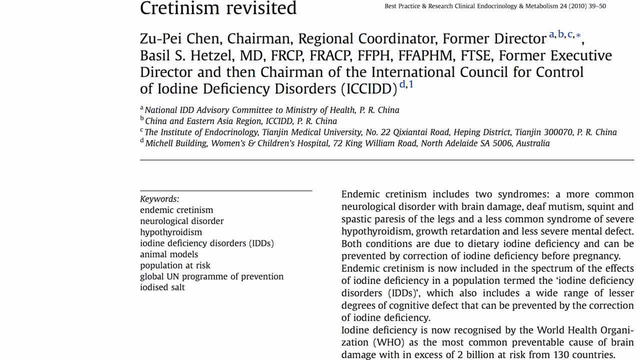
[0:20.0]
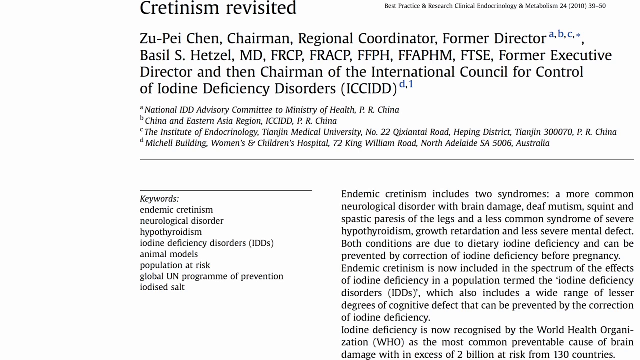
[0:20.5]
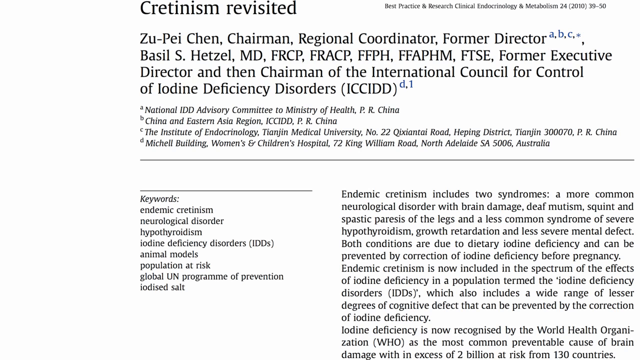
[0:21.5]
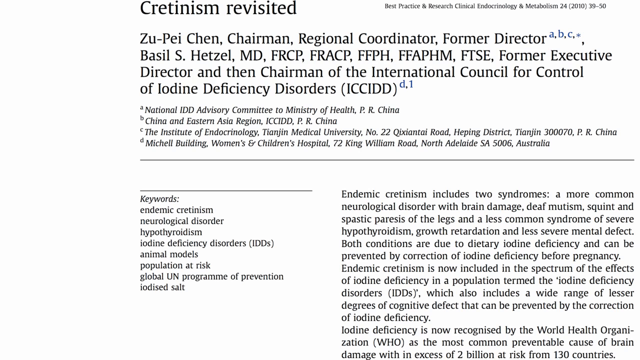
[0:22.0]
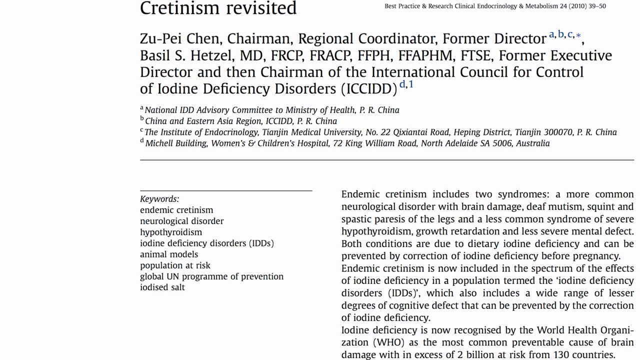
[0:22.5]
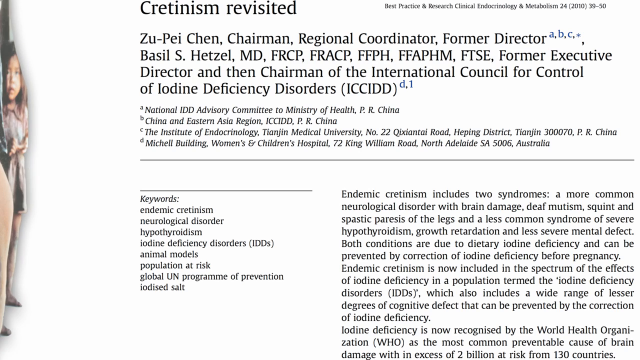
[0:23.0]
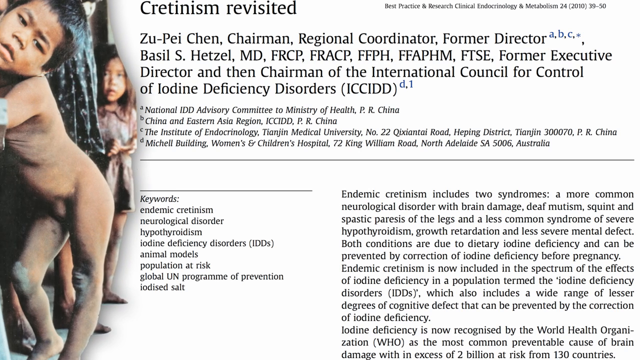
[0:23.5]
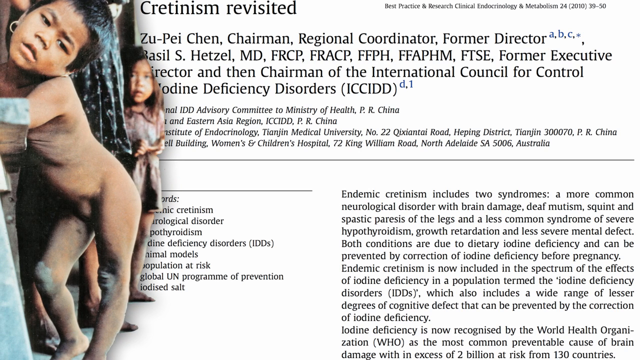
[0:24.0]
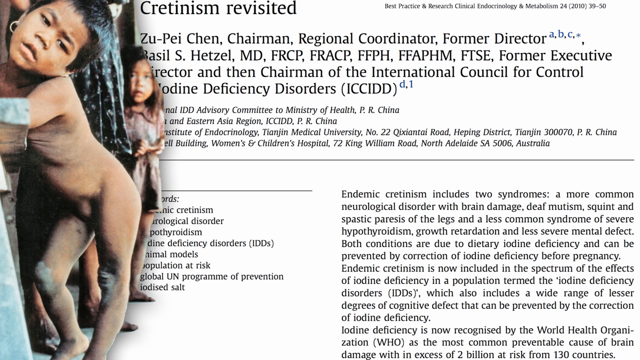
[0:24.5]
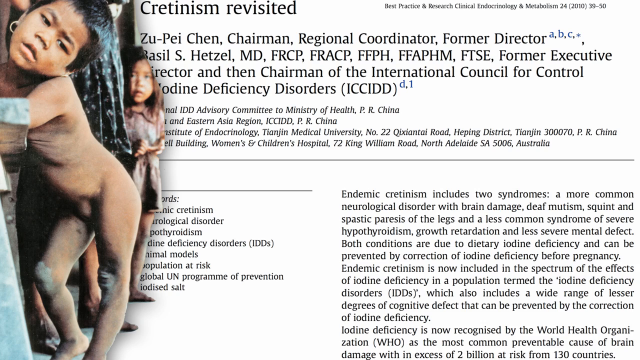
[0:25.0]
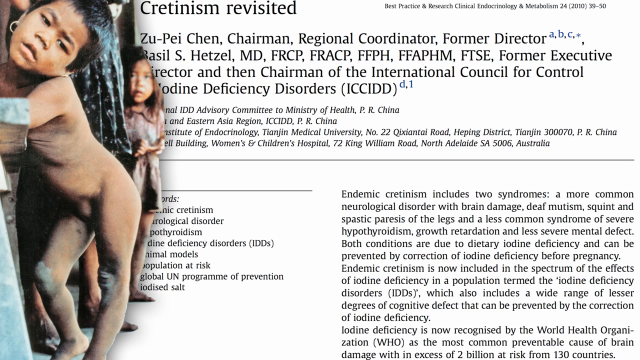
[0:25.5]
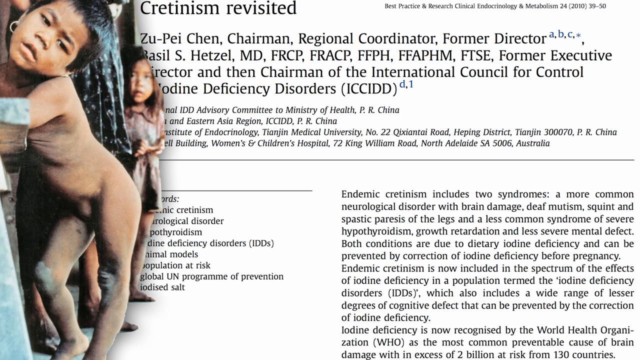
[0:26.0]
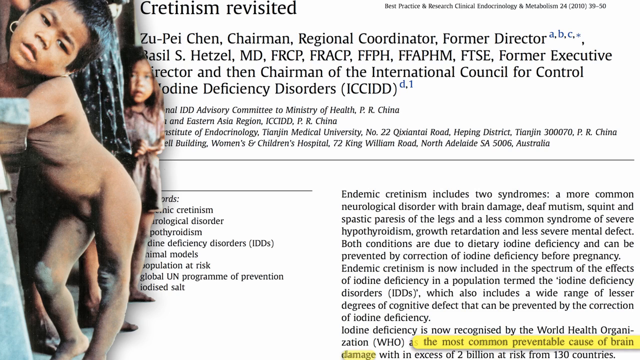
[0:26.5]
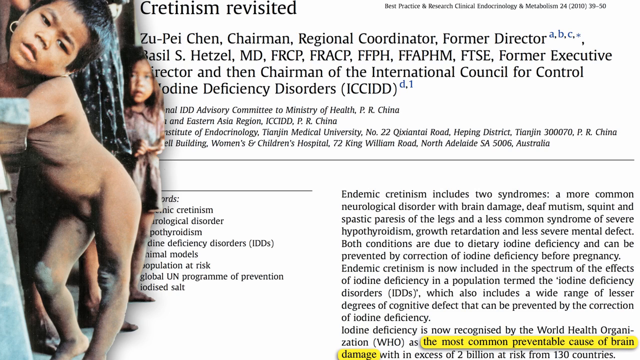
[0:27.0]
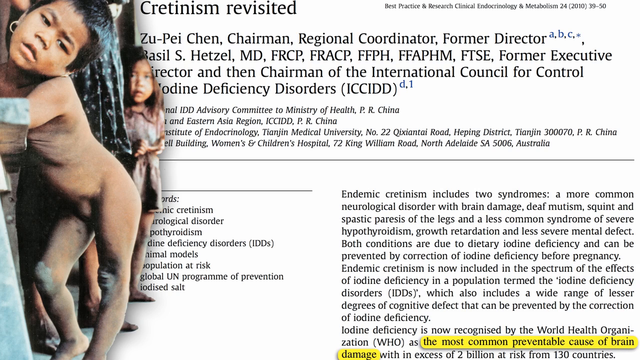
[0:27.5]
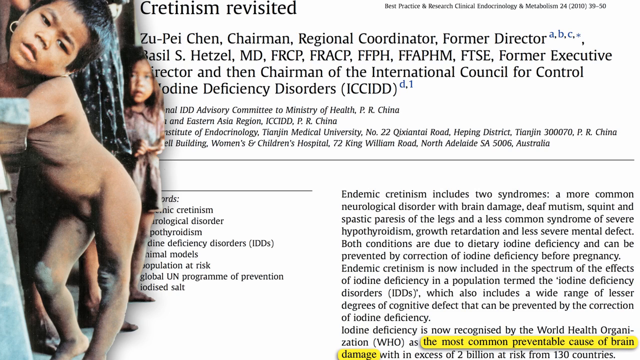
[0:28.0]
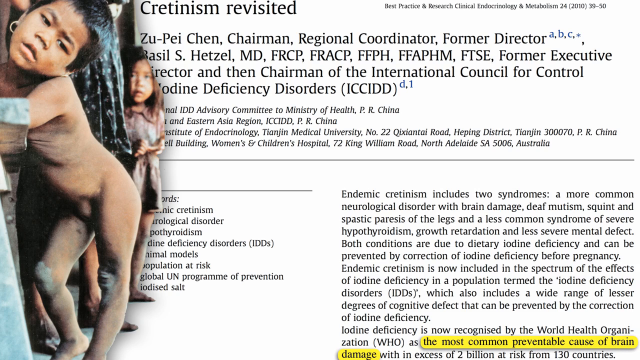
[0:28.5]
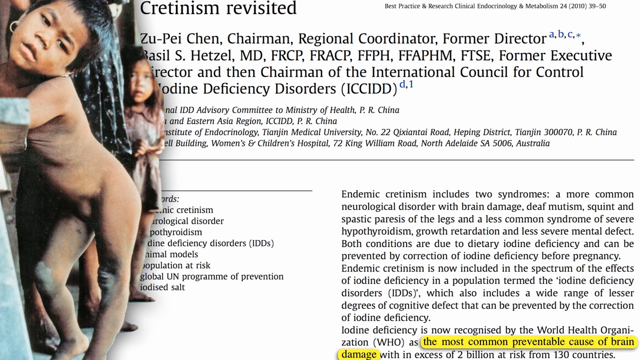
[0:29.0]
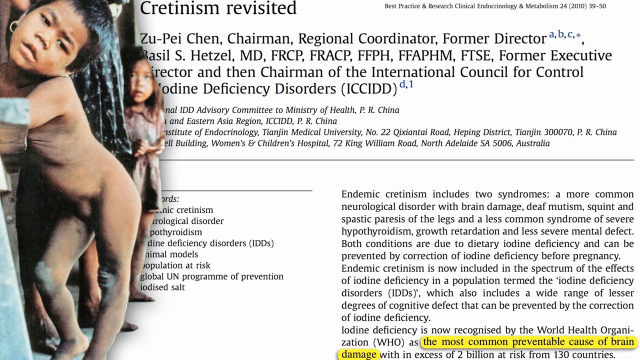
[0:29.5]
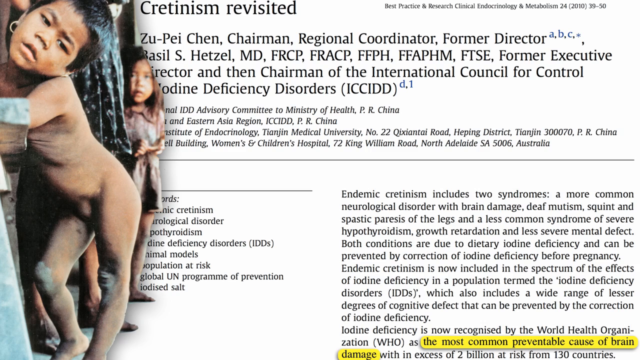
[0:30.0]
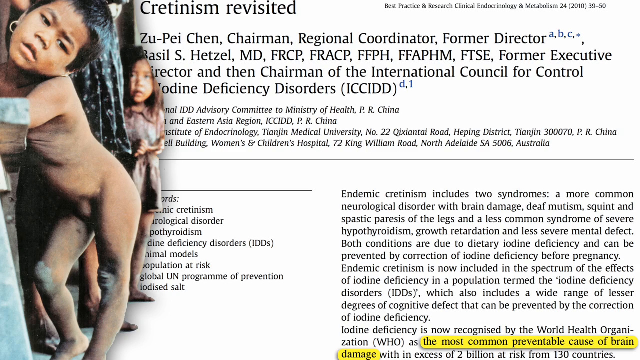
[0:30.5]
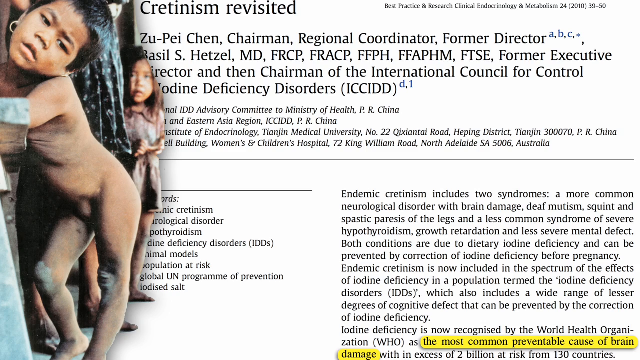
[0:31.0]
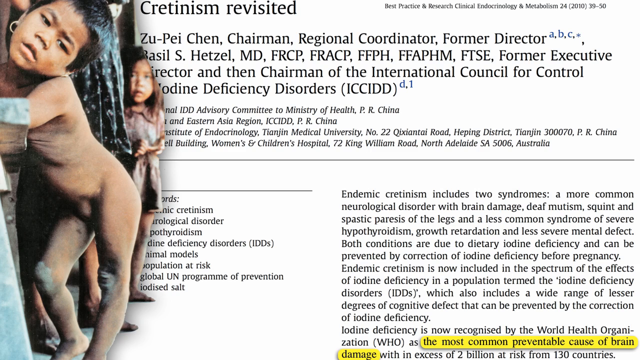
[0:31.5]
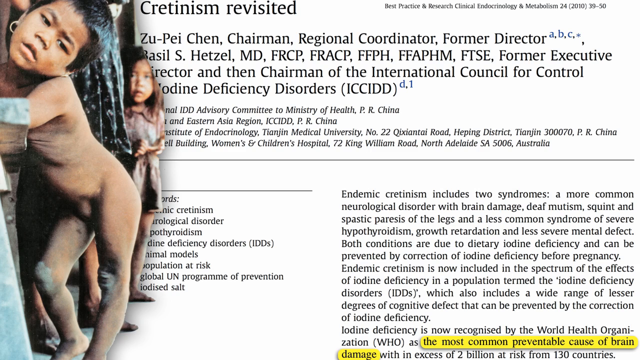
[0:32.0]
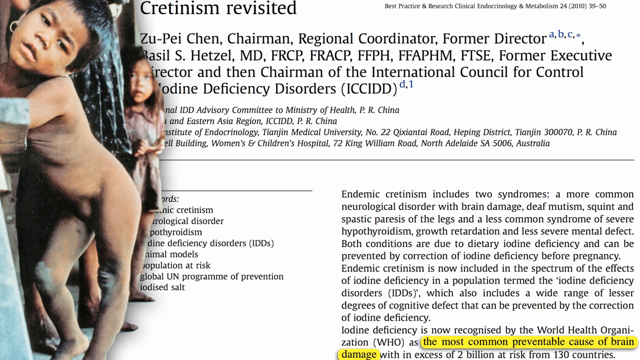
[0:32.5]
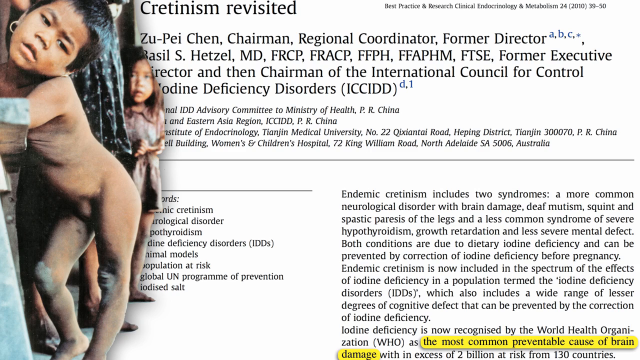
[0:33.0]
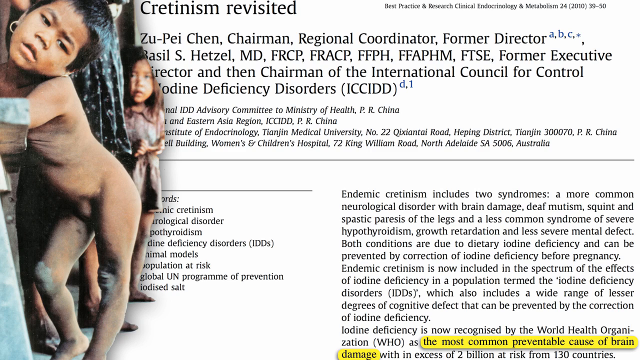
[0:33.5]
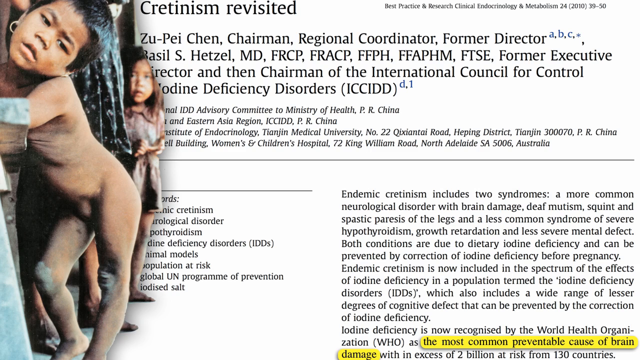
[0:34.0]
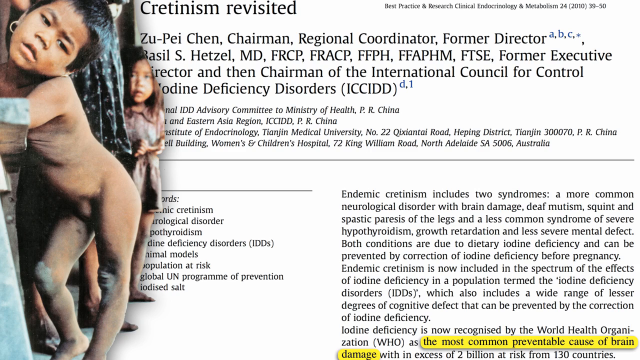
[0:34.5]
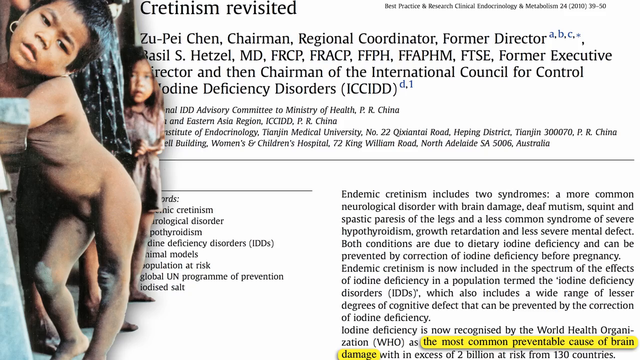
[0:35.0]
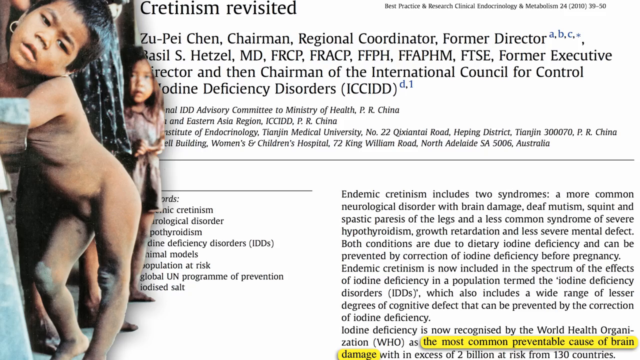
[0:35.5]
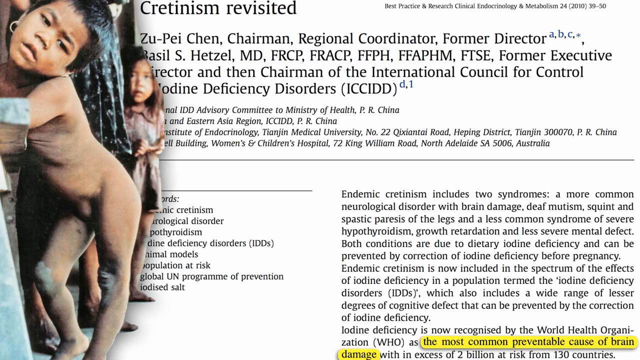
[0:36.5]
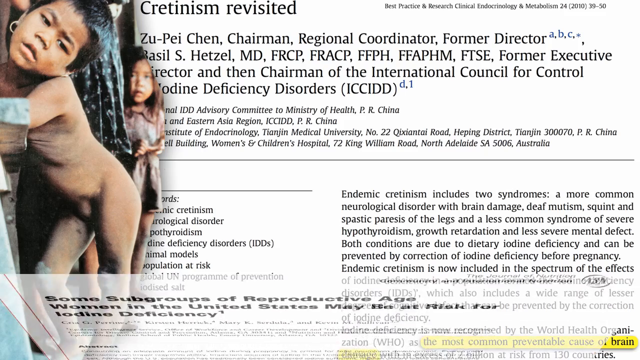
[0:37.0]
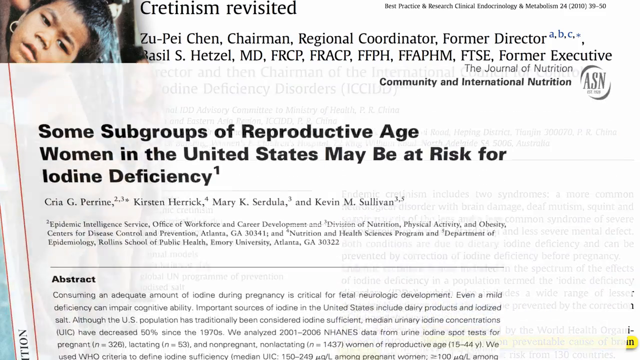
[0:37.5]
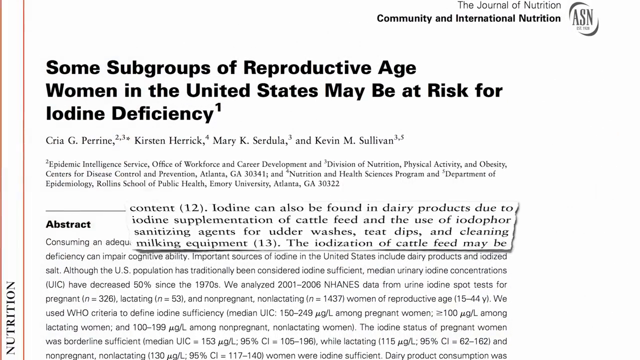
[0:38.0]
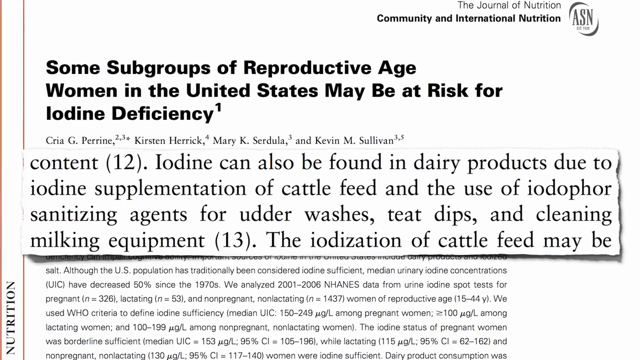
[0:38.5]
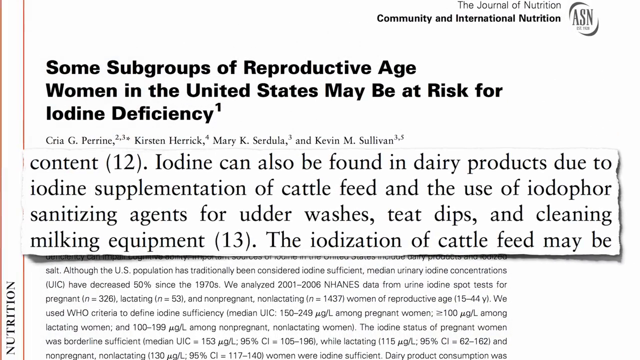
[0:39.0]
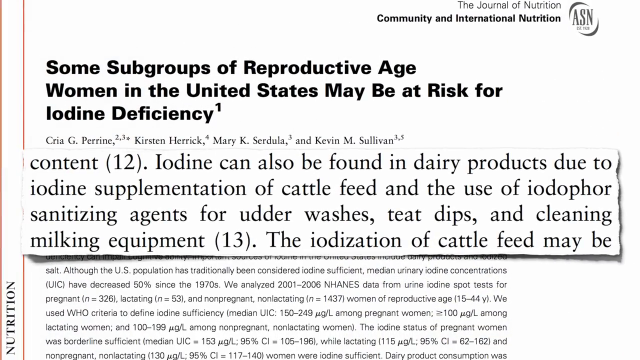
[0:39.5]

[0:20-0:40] A picture of a malnourished male child slides in on the left. It shows his full, somewhat shadowed genitalia, with women in the background. What looks to be a dress is behind the child, and another young female child is standing and staring into the camera. The boy has an earring in his ear and is leaning against a table of some kind, with dry knees, looking off to the side of the camera. The picture is on top of the ICCIDD title. The page then shows the title "some subgroups of reproductive age women in the United States may be at risk for iodine deficiency." Next, zoomed-in text reads "iodine can also be found in dairy products due to iodine supplementation of cattle feed and the use of" sanitizing agents "for udder washes, teat dips, and cleaning milking equipment."